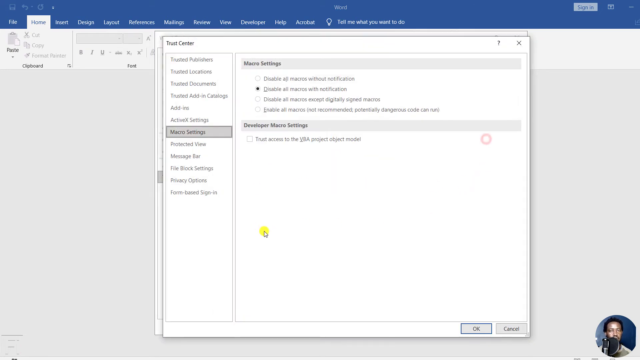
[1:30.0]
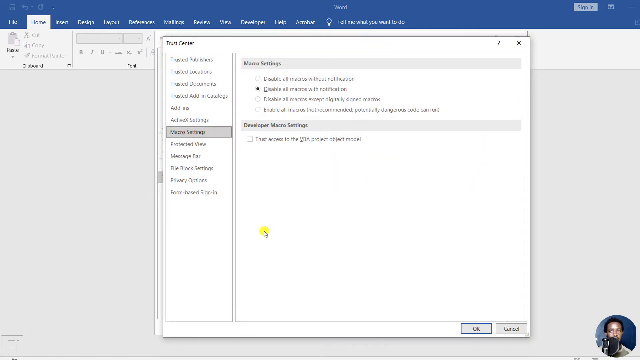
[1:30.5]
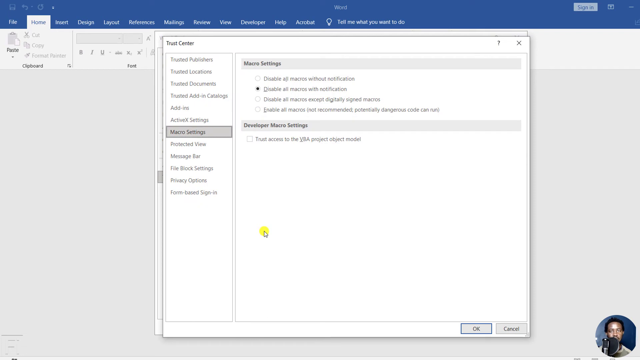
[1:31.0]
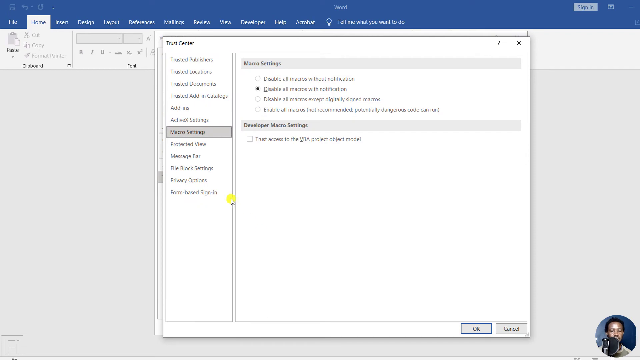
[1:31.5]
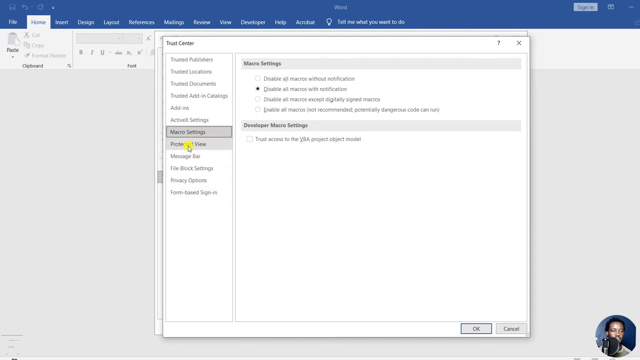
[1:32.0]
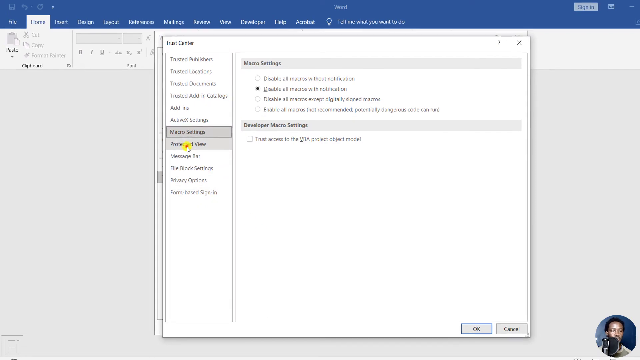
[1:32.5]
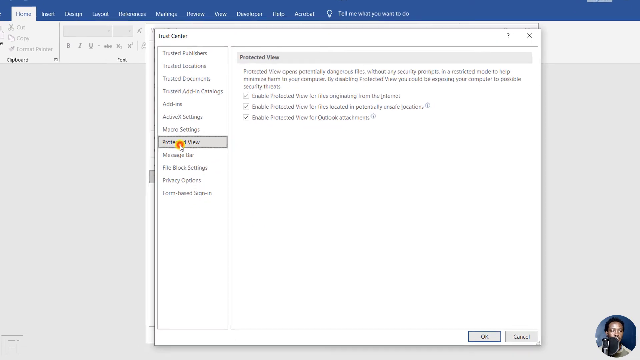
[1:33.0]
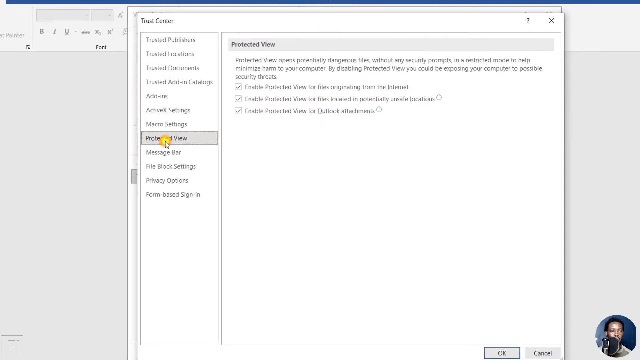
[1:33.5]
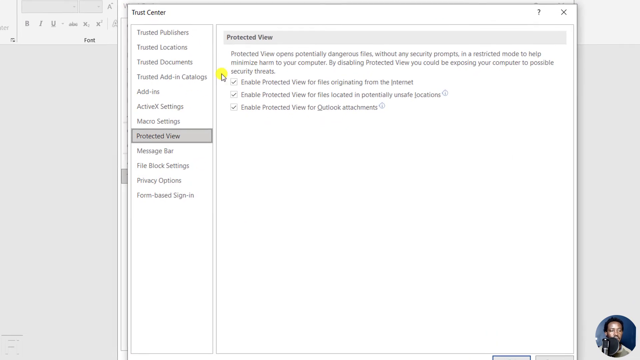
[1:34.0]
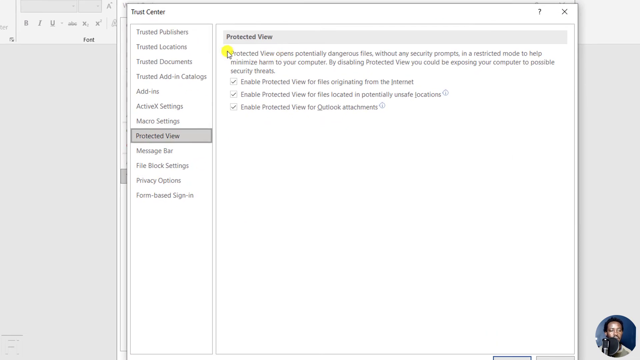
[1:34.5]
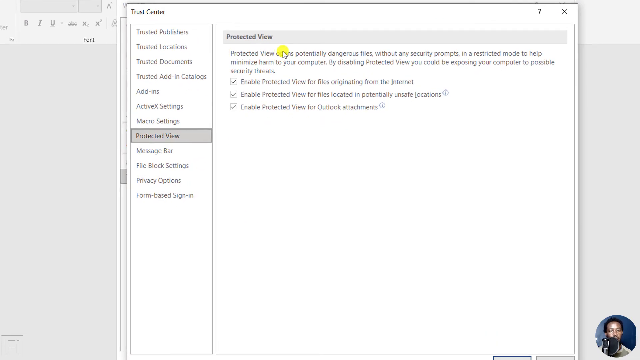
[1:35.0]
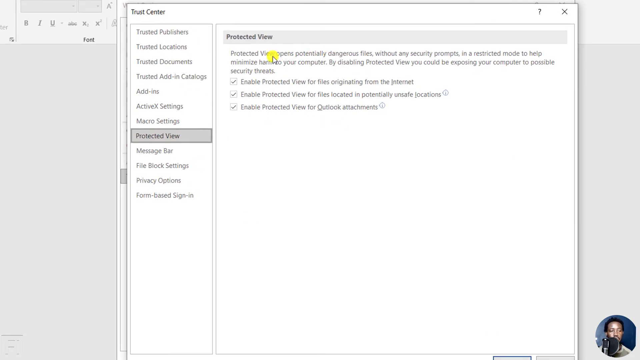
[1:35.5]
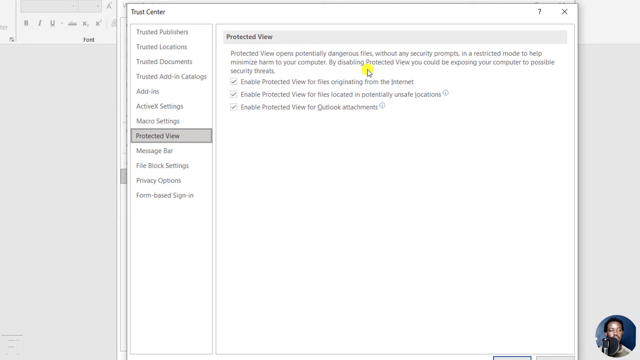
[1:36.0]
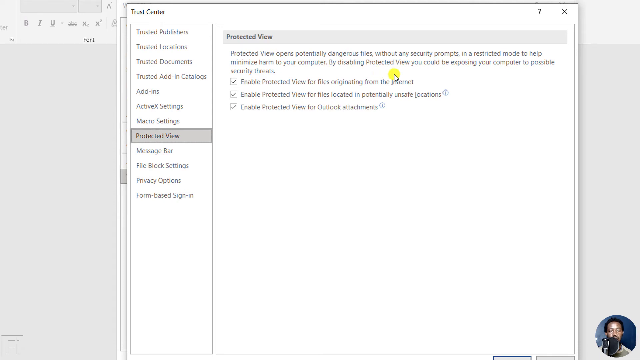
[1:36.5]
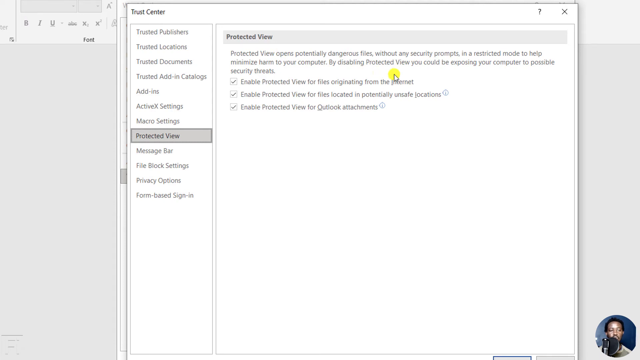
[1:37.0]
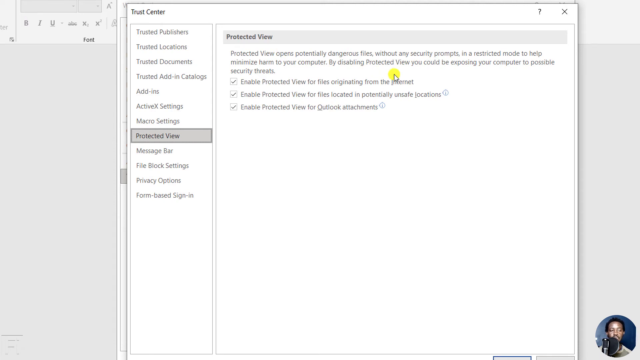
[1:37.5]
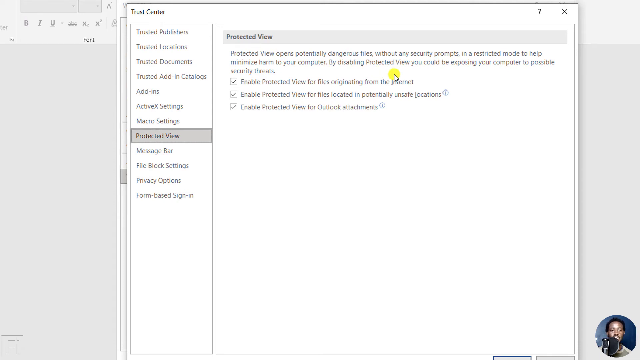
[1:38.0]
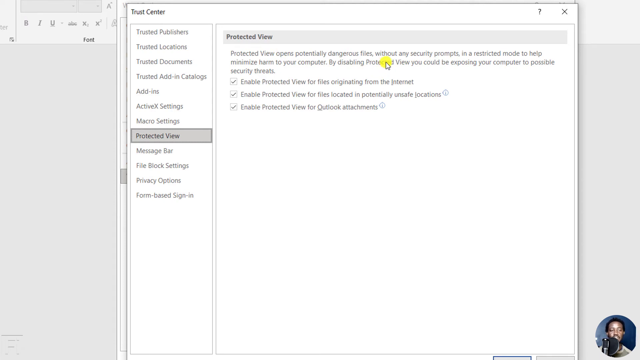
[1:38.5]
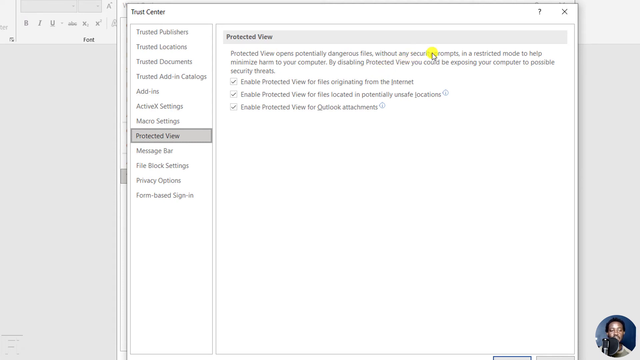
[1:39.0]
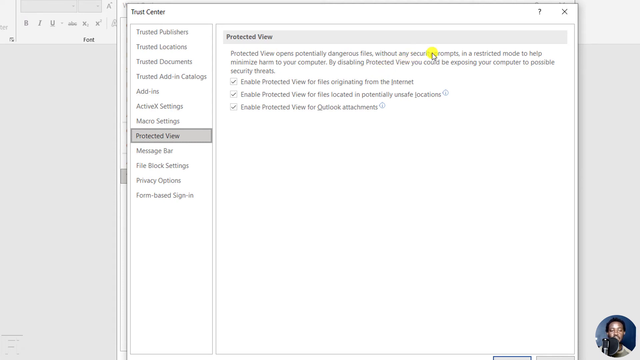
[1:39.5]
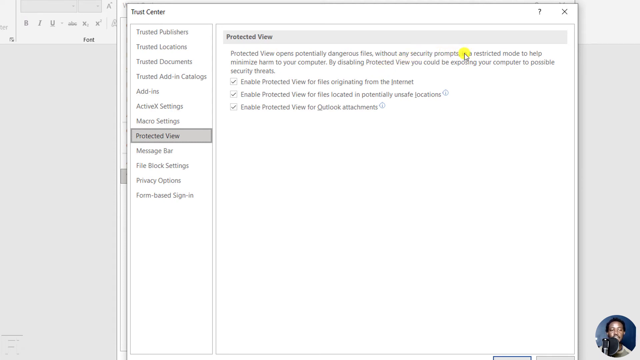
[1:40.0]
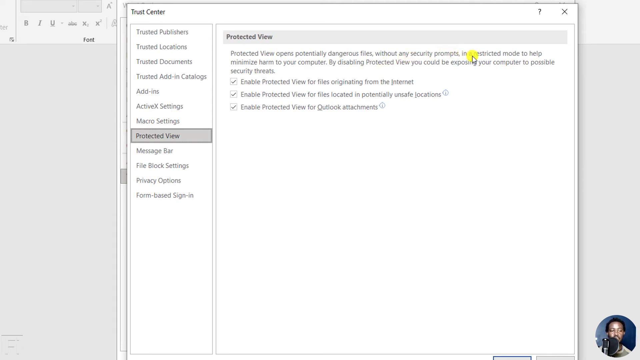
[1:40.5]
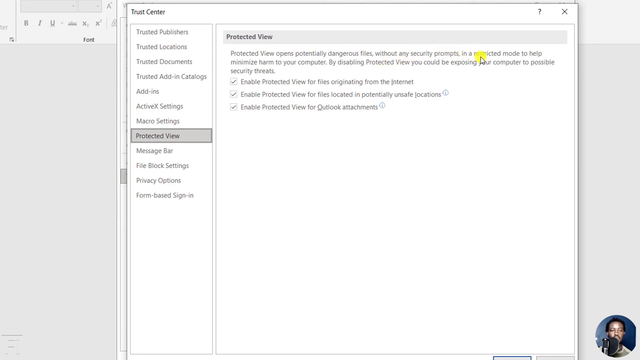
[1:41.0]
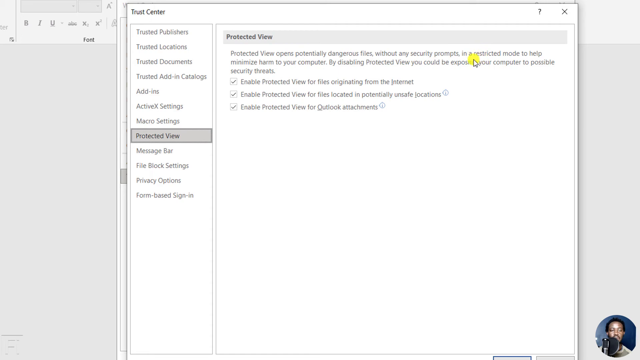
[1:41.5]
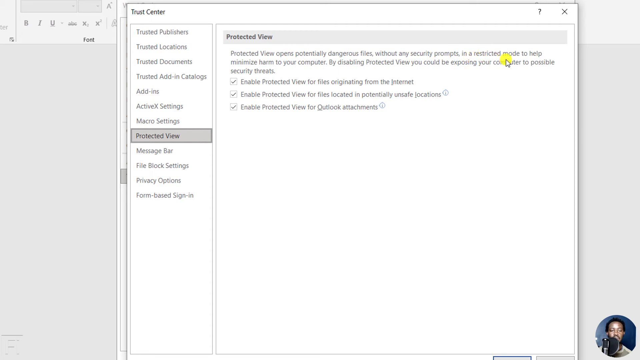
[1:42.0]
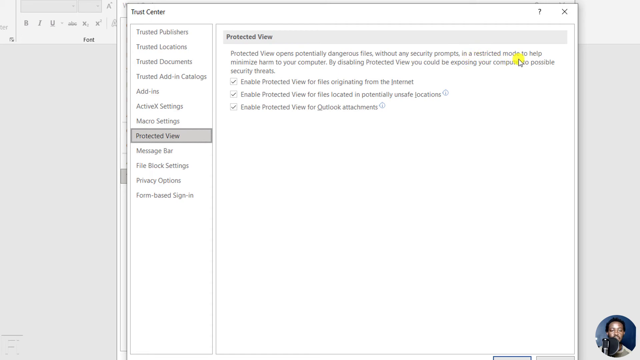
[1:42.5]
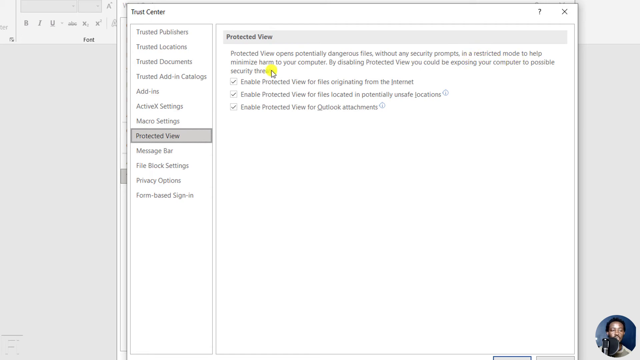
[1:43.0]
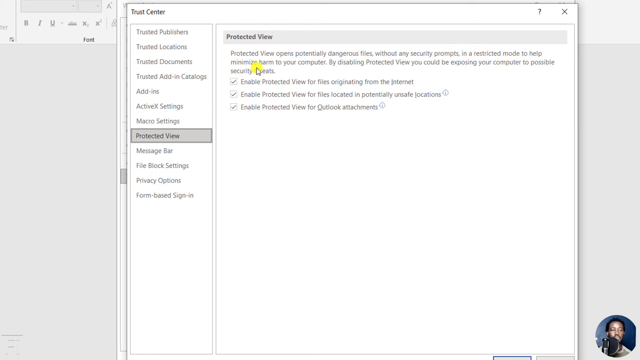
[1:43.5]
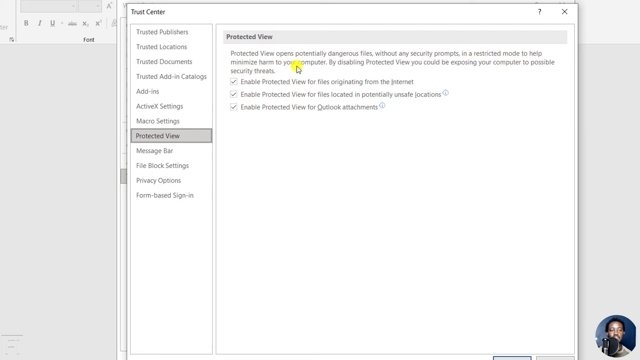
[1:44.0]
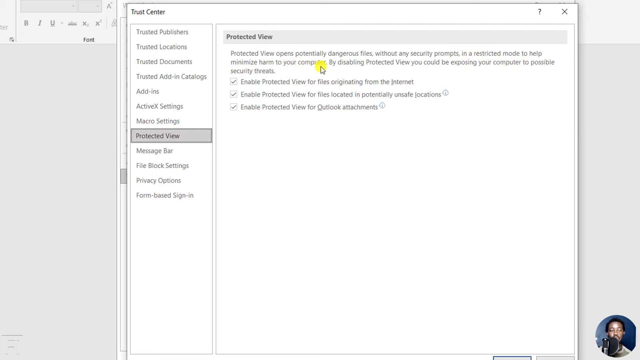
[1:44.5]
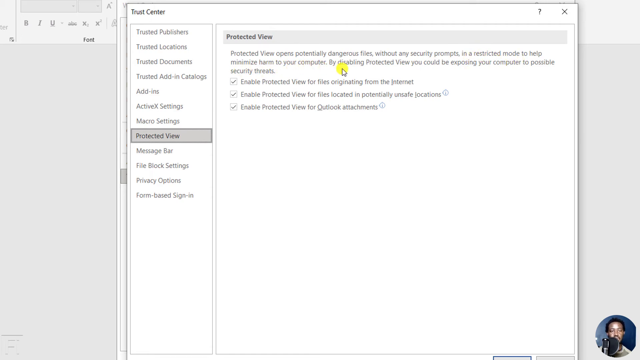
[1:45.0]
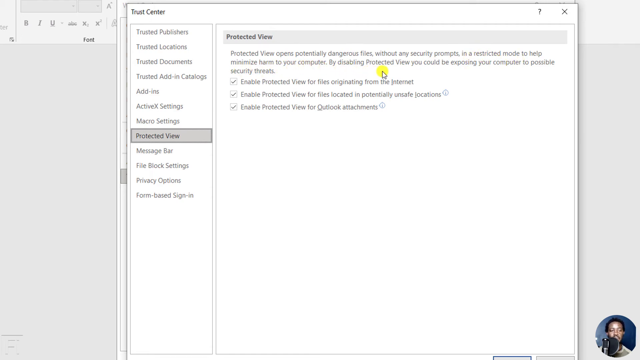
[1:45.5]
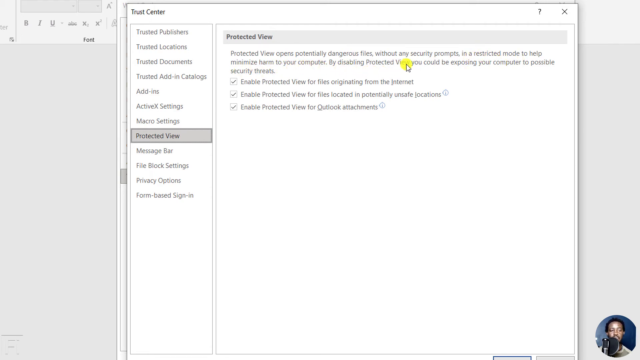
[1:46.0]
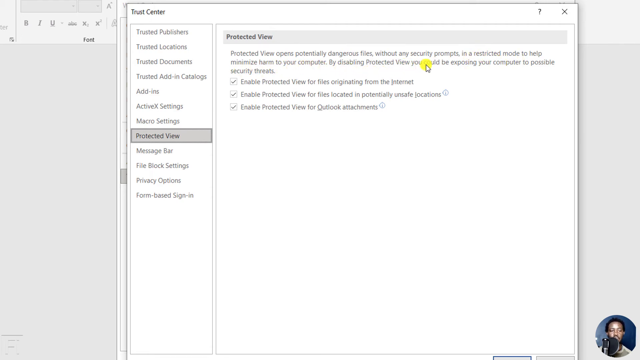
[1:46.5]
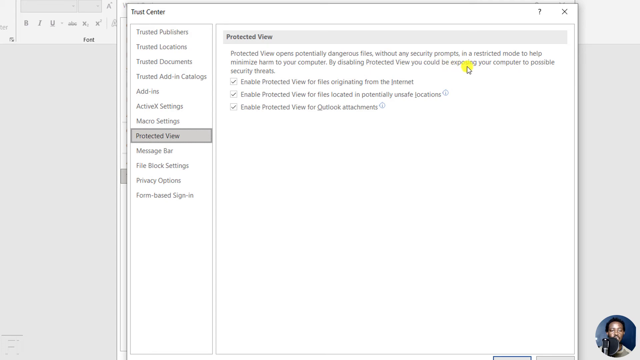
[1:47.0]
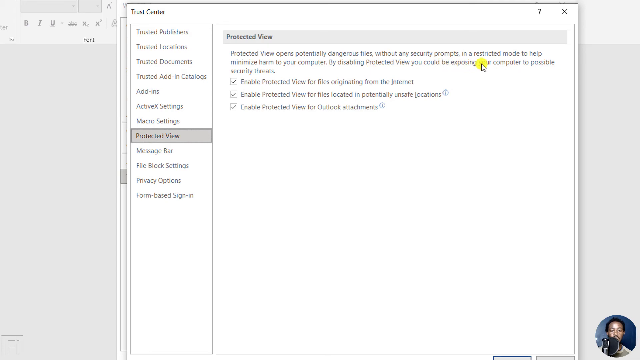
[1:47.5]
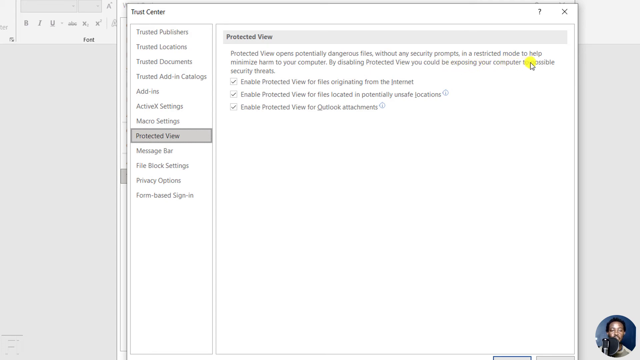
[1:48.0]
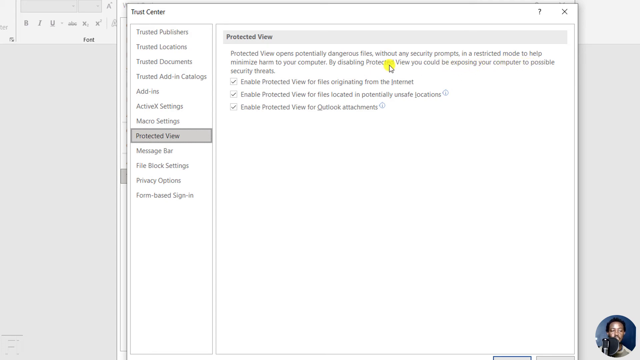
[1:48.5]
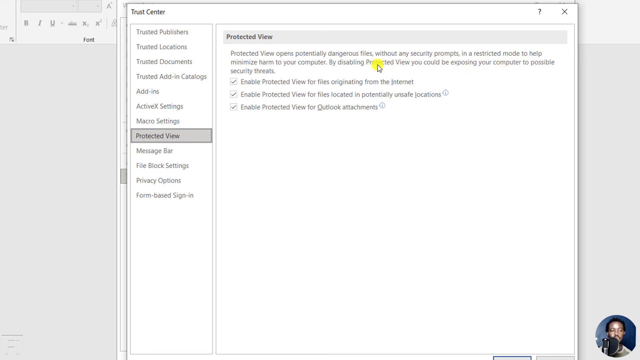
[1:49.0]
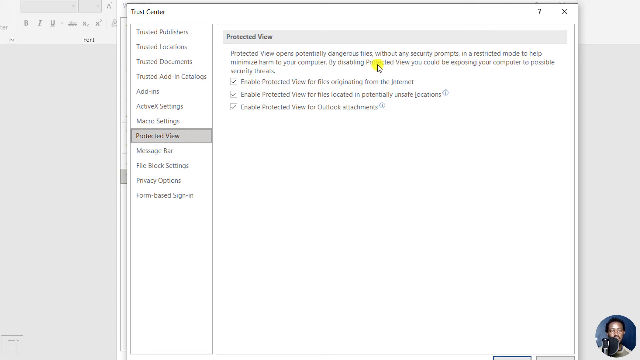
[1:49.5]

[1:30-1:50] The Microsoft Word program is open on this page. The screen zooms in as the cursor clicks a button on the left-hand side that says "Protected View". This opens a page that says "Protected View" with the text "Protected View opens potentially dangerous files without any security prompts in a restricted mode to help minimize harm to your computer. By disabling Protected View, you could be exposing your computer to possible security threats." The cursor moves over this line of text. Below it are three options, each checkmarked: "Enable Protected View for files originating from the Internet", "Enable Protected View for files located in potentially unsafe locations", and "Enable Protected View for Outlook attachments". The cursor moves from left to right over these lines of text, probably indicating that the person is reading the text out loud.